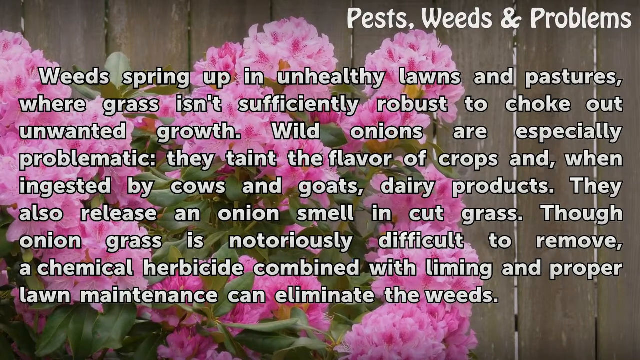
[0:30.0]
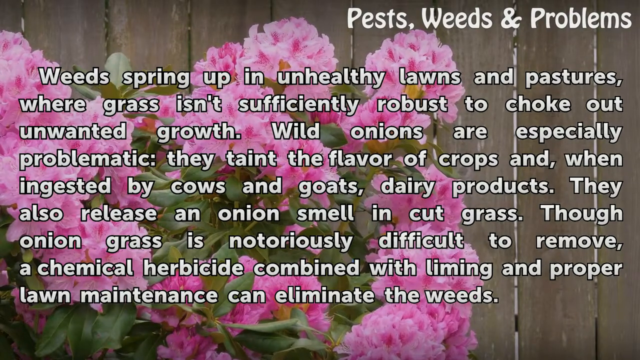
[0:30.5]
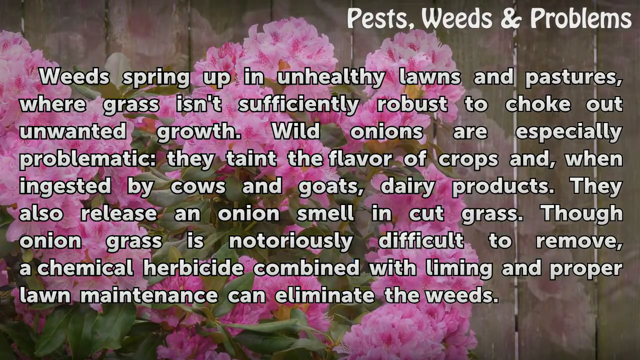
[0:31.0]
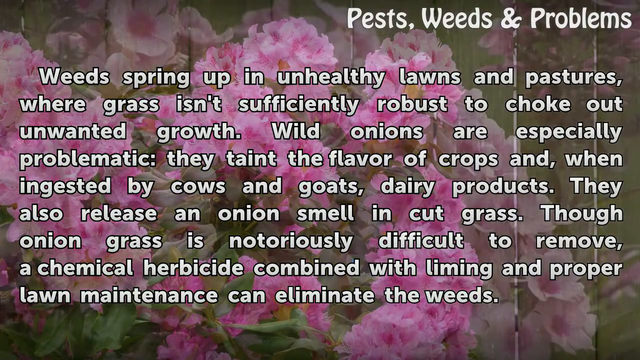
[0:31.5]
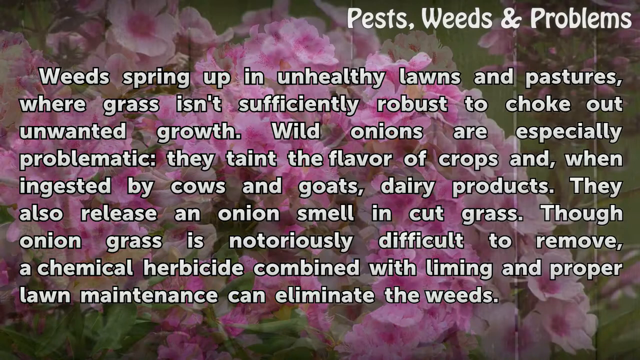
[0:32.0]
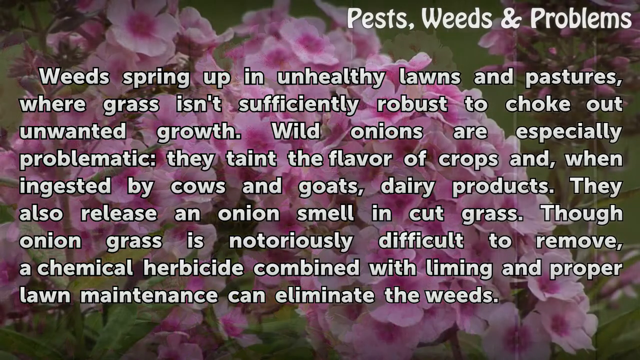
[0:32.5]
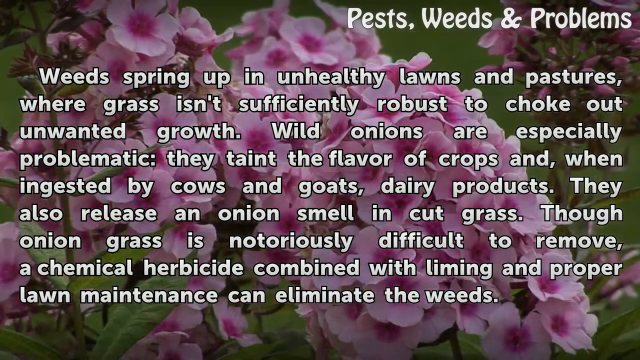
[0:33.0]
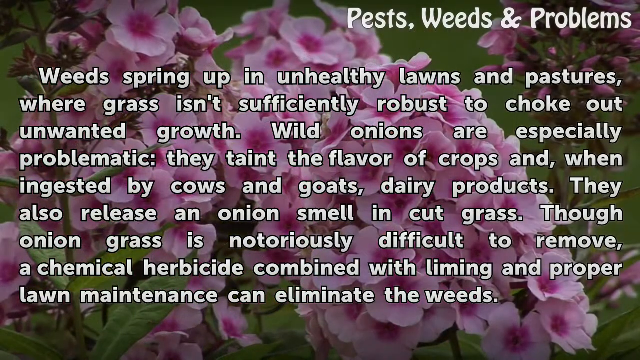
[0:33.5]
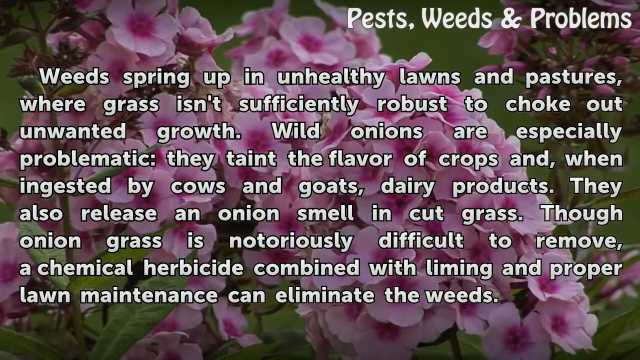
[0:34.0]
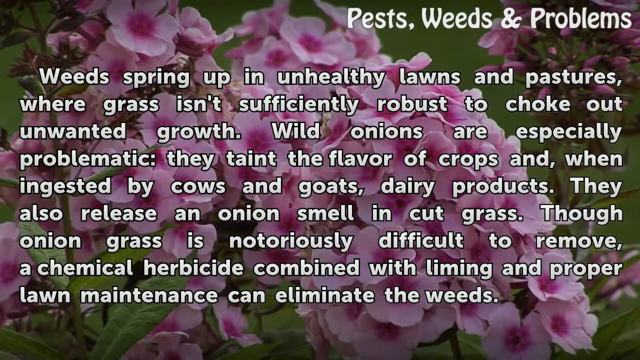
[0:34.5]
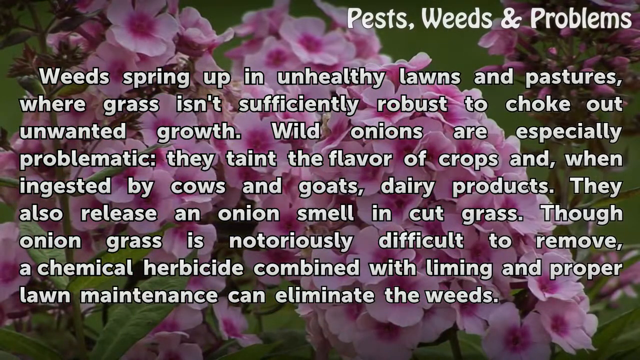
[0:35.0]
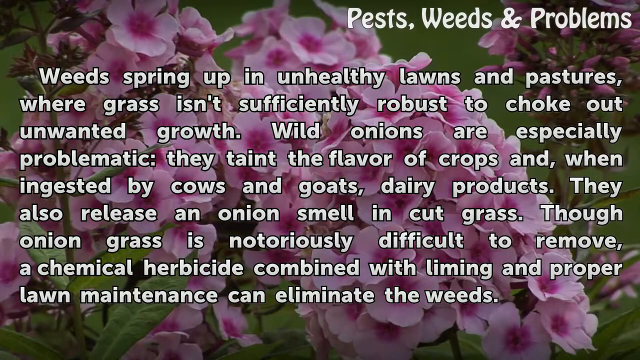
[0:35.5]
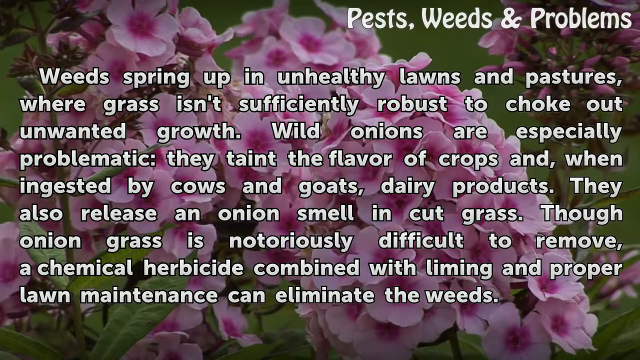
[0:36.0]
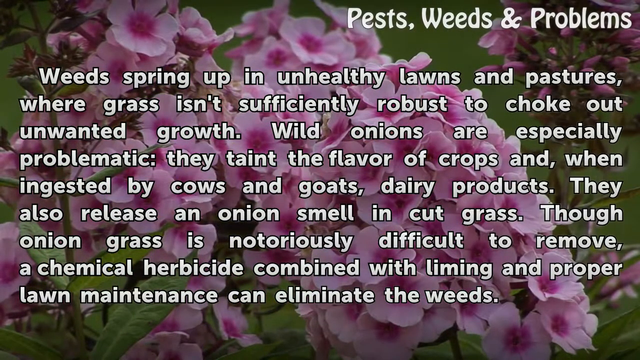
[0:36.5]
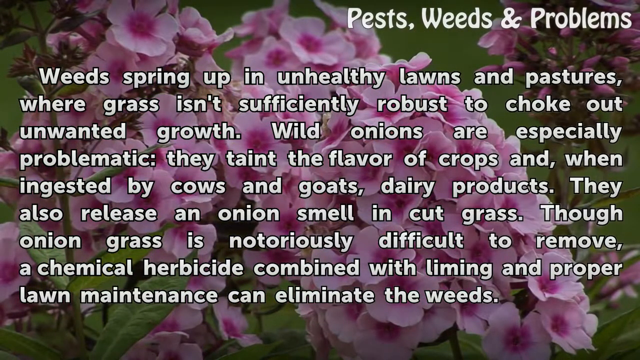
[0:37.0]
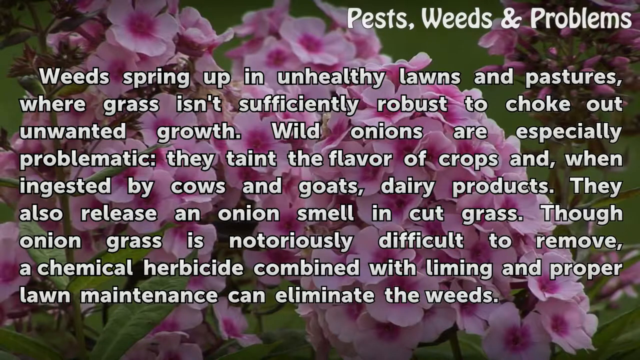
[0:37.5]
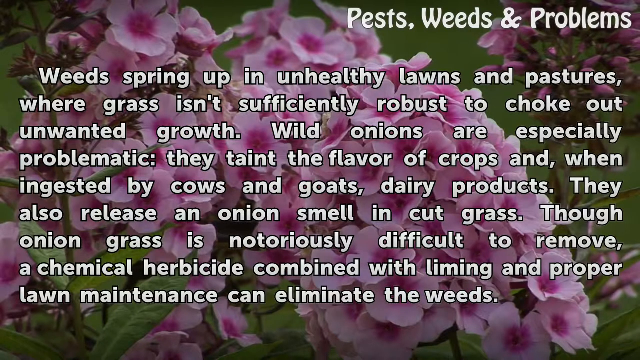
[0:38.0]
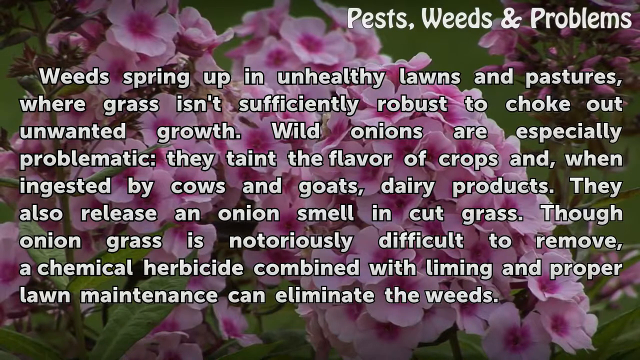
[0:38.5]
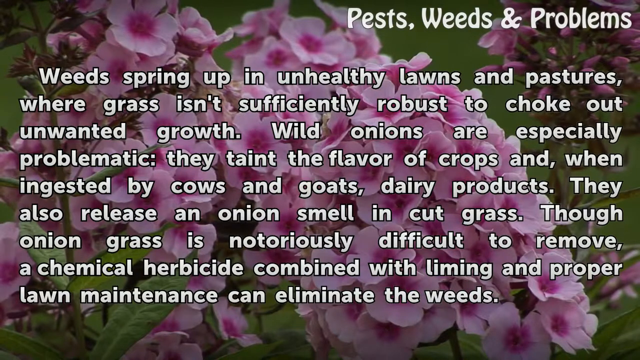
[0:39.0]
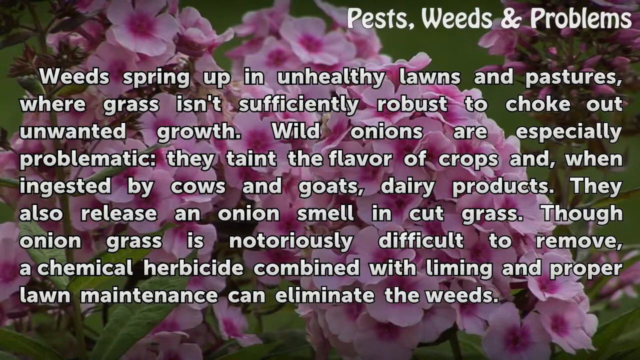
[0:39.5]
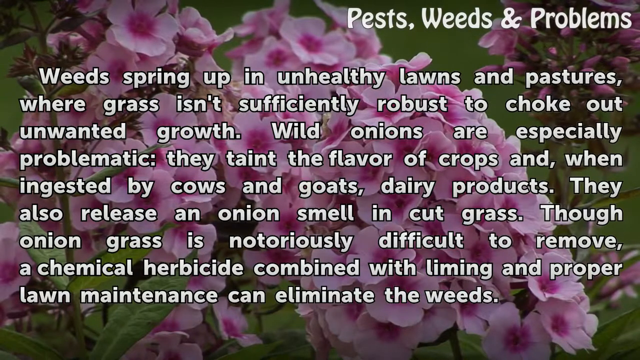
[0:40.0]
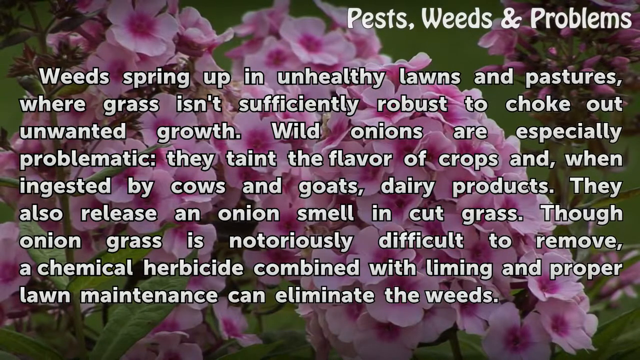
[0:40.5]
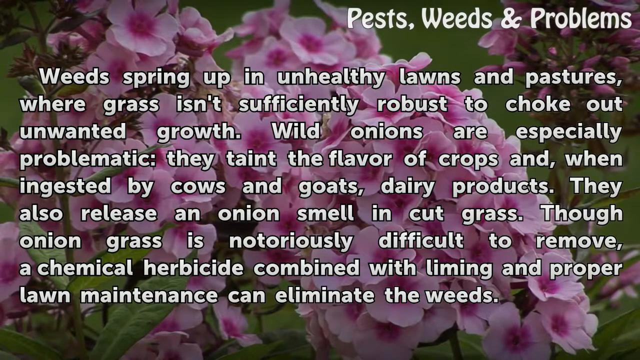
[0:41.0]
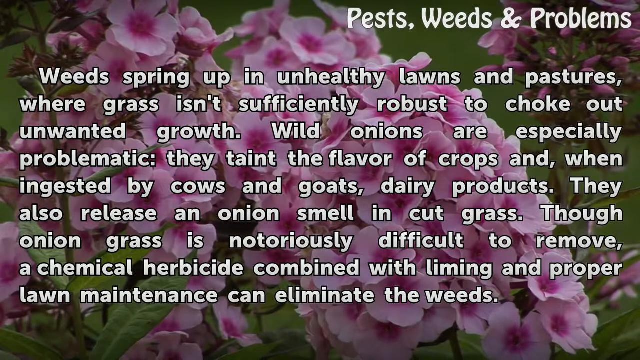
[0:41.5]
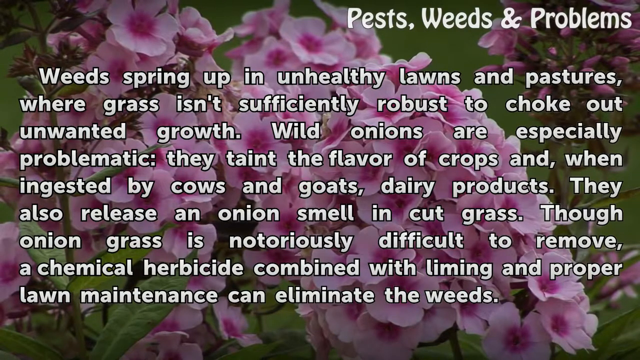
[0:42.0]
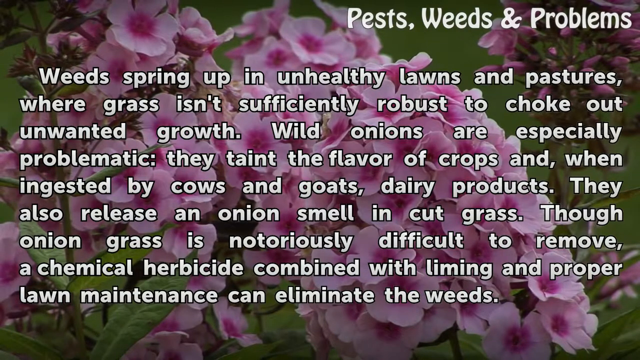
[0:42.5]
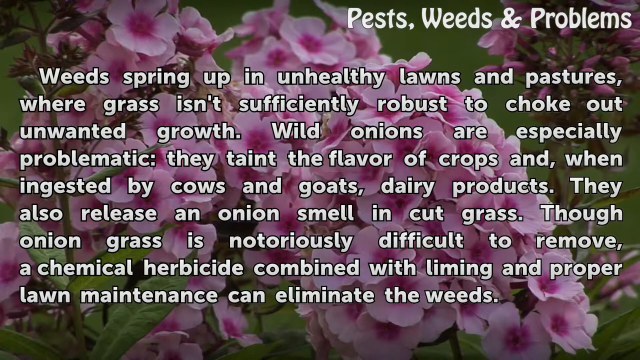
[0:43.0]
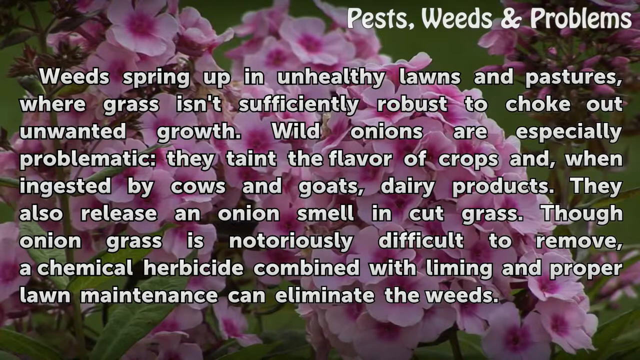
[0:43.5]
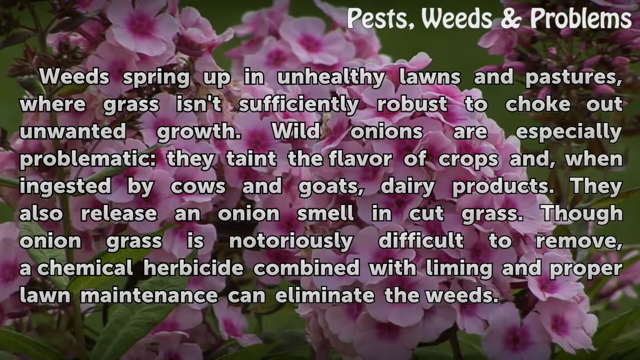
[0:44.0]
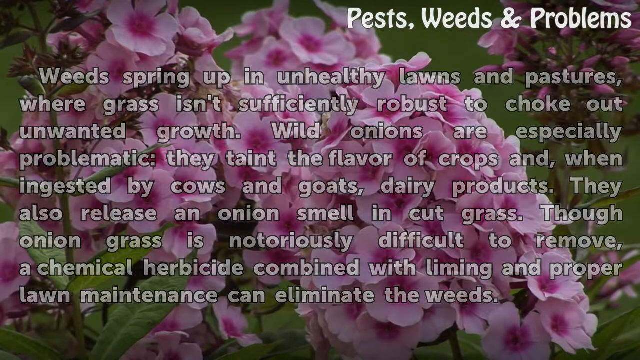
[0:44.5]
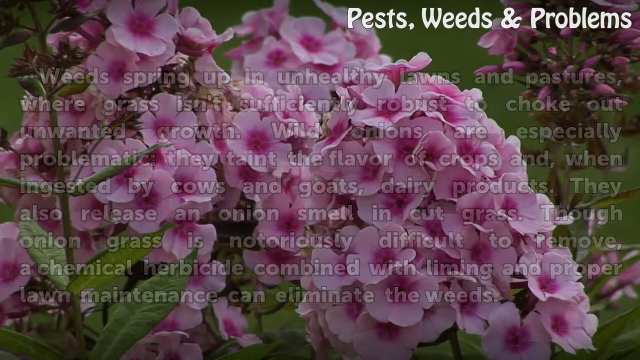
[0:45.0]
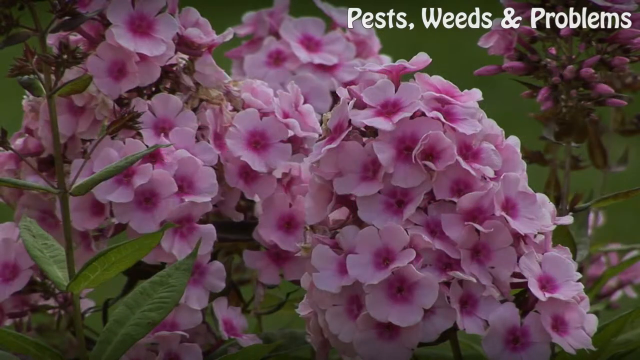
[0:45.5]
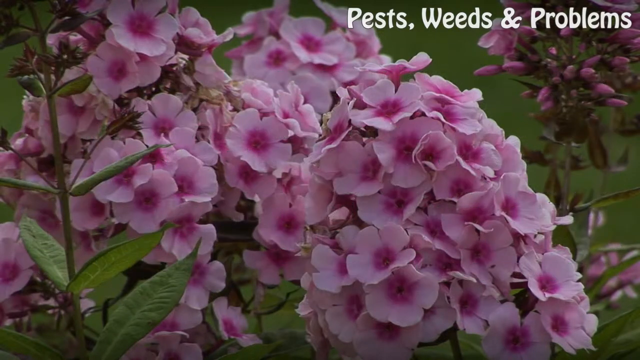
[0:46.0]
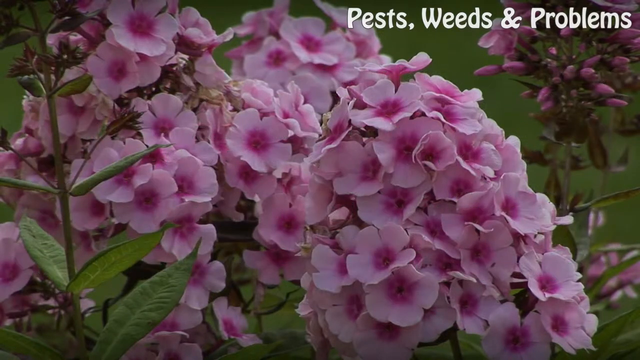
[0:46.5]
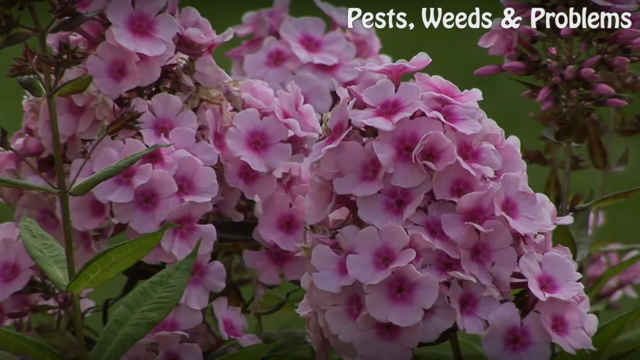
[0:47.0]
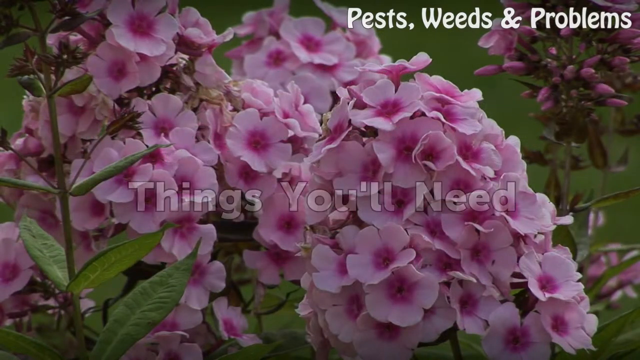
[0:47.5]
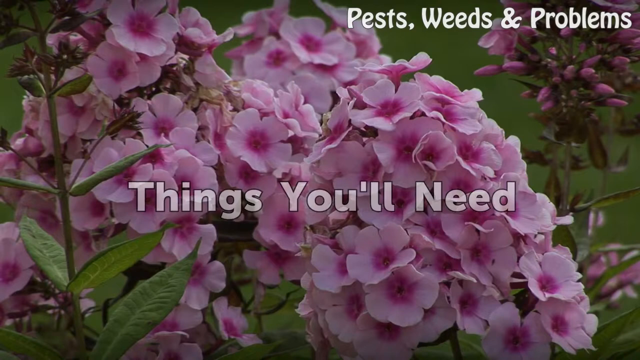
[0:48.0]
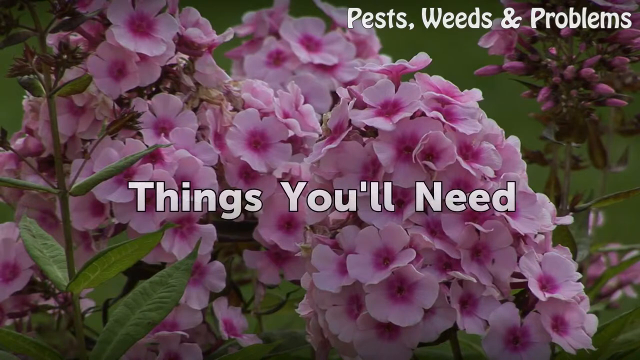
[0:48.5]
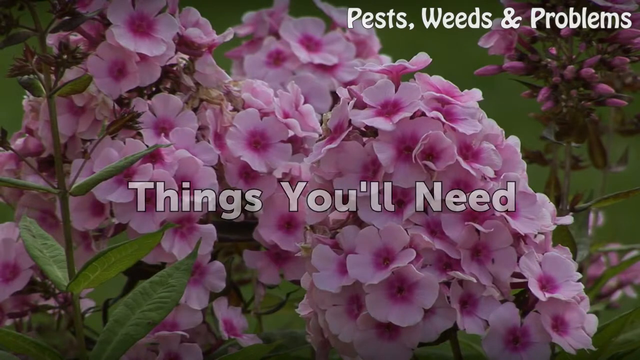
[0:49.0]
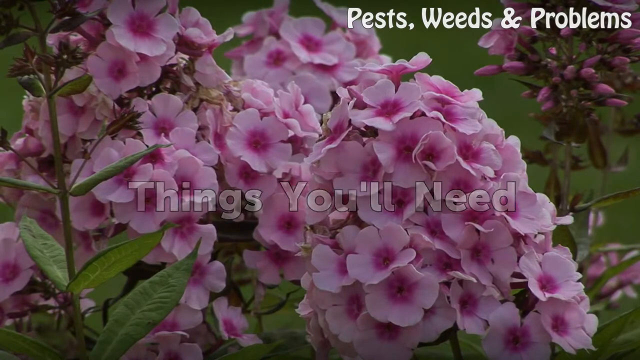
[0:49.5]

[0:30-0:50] The long description of how to get rid of the weeds remains on screen, but the flower image behind the text changes: it is still the same pink flower, shown from a different angle and with different lighting. The large amount of text stays on screen for a rather long time. Then the text slowly fades, and new text slowly appears in the middle of the screen reading "Things you'll need." It shows for only a brief couple of seconds before slowly disappearing.